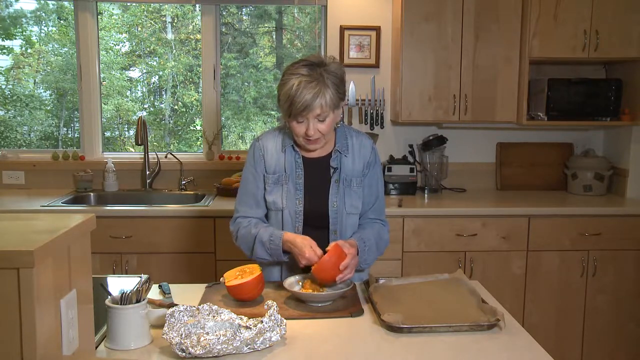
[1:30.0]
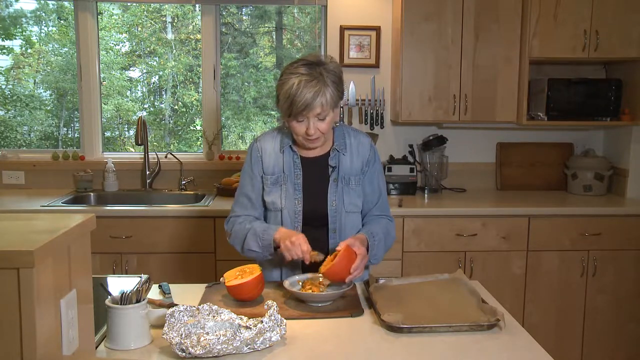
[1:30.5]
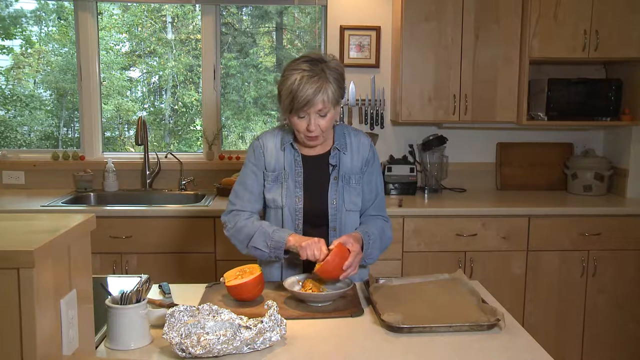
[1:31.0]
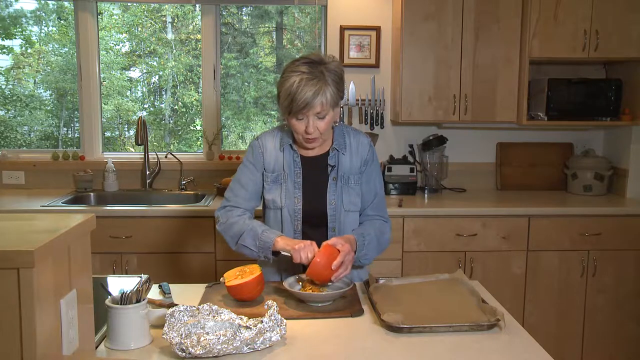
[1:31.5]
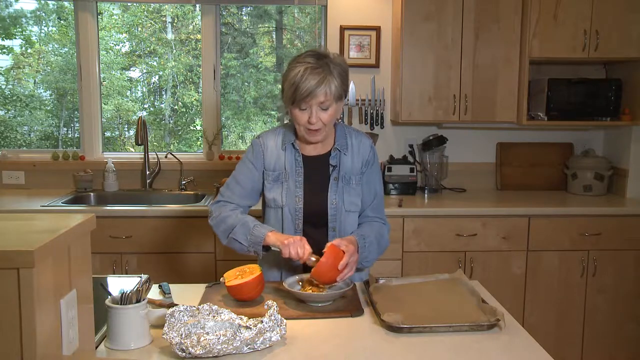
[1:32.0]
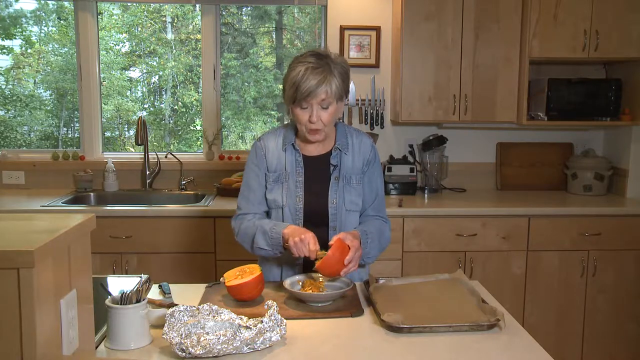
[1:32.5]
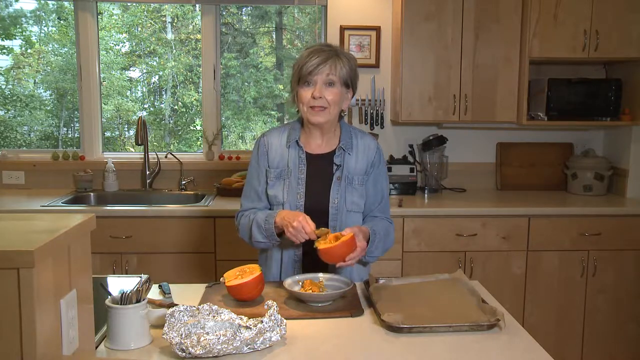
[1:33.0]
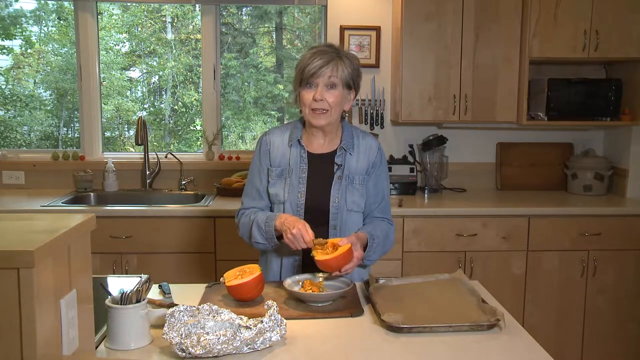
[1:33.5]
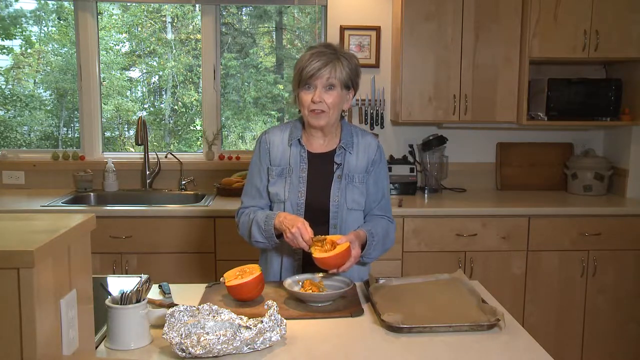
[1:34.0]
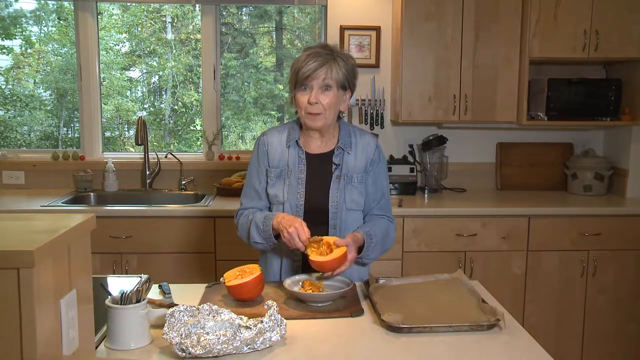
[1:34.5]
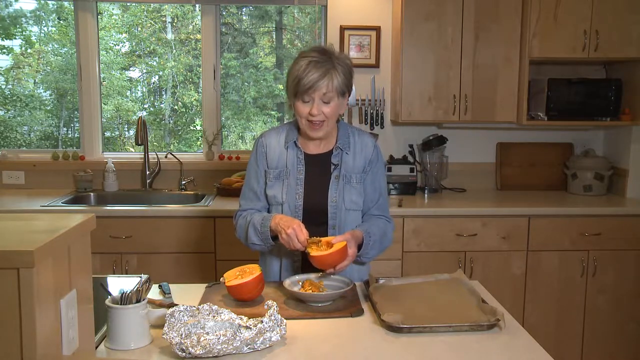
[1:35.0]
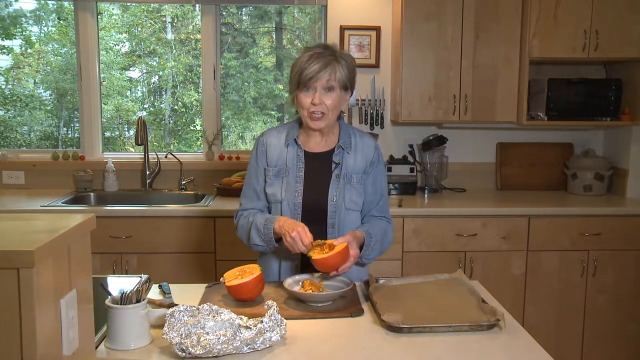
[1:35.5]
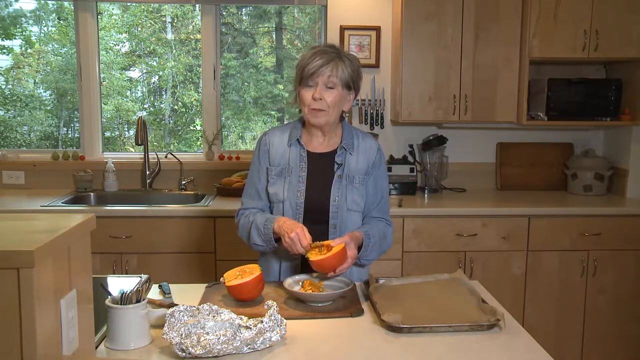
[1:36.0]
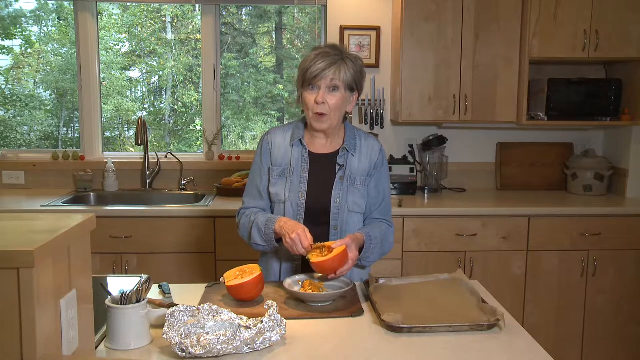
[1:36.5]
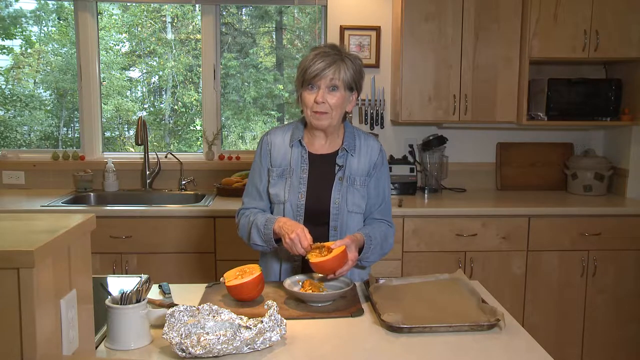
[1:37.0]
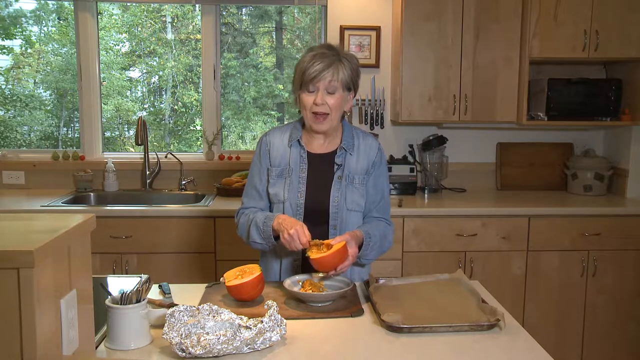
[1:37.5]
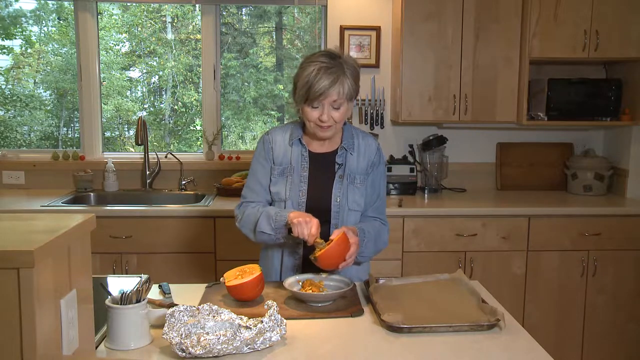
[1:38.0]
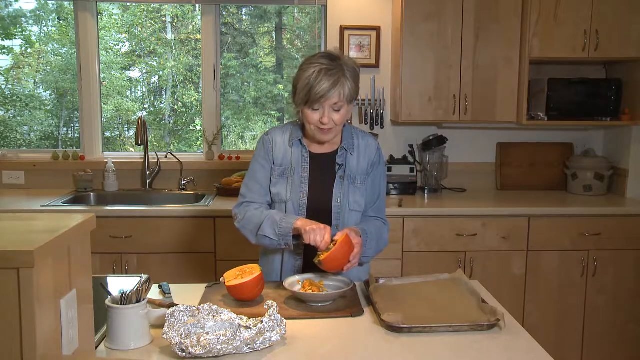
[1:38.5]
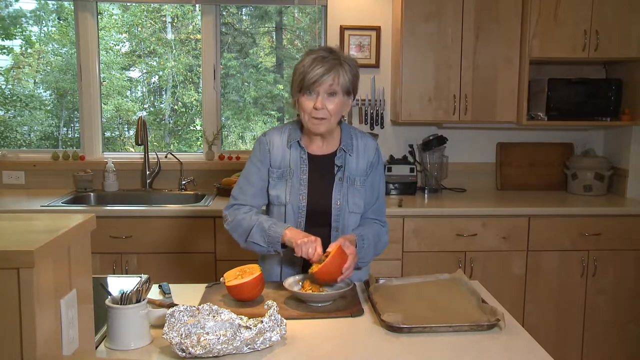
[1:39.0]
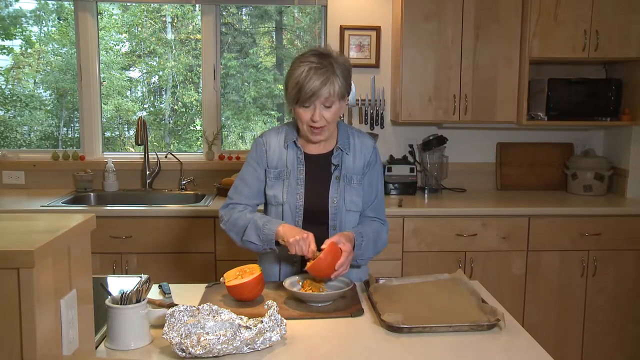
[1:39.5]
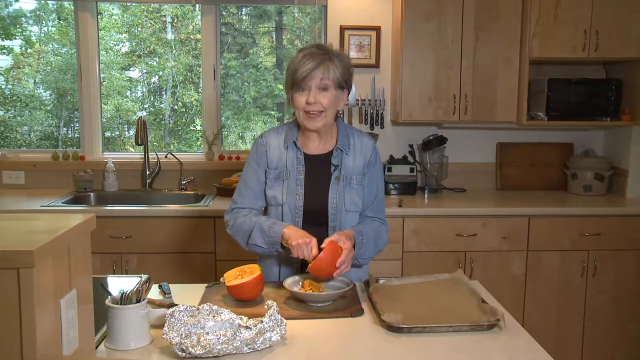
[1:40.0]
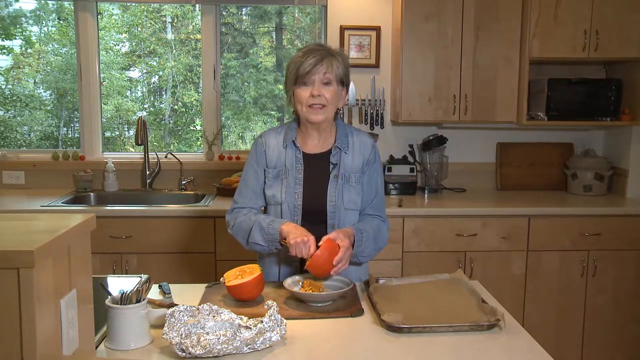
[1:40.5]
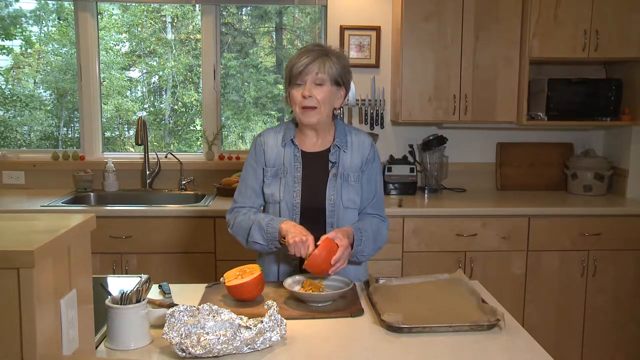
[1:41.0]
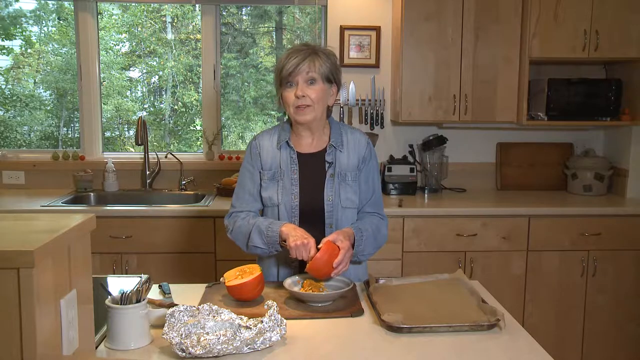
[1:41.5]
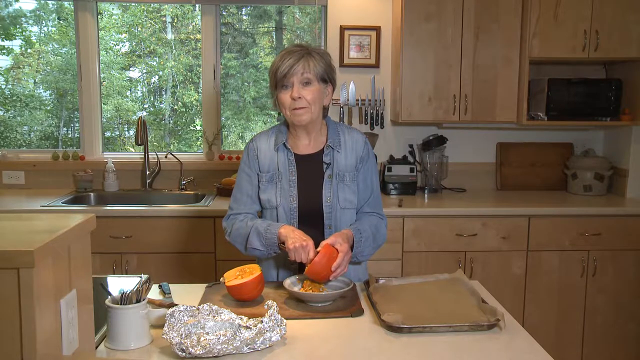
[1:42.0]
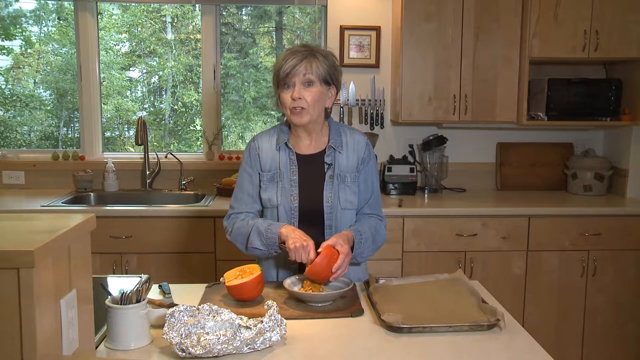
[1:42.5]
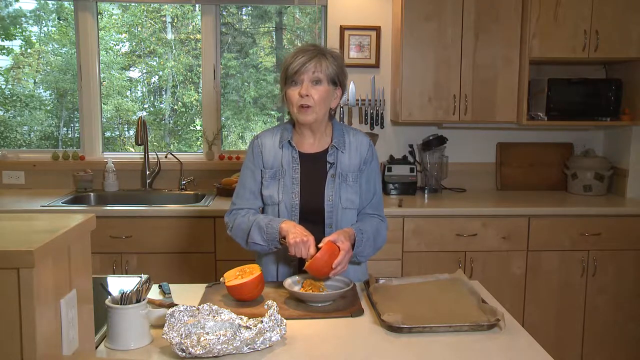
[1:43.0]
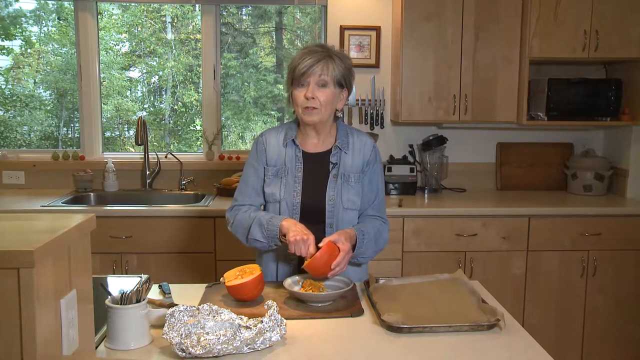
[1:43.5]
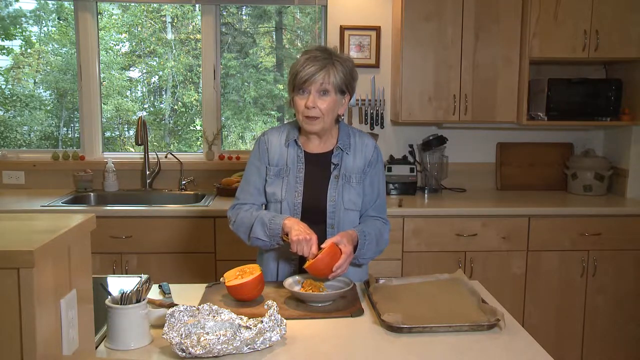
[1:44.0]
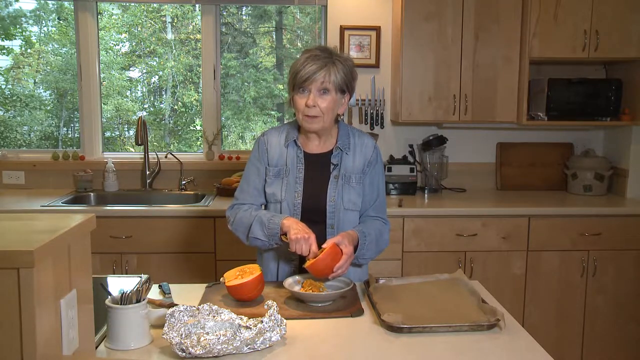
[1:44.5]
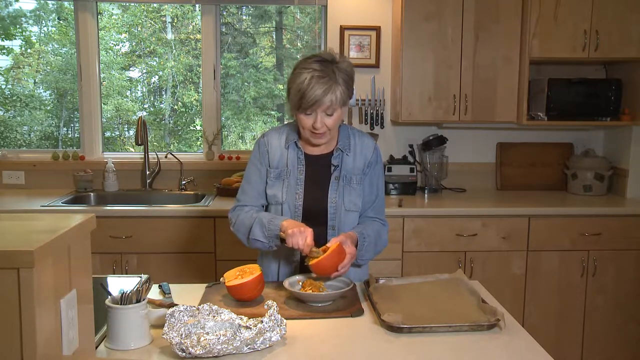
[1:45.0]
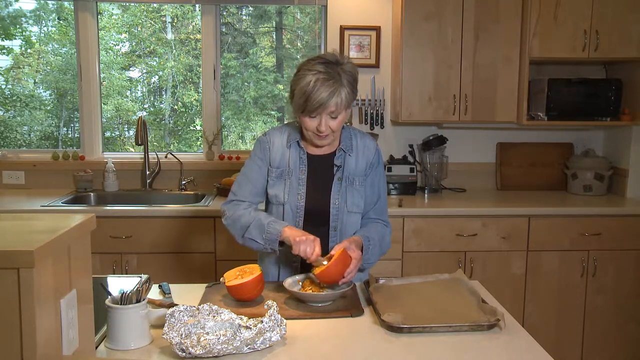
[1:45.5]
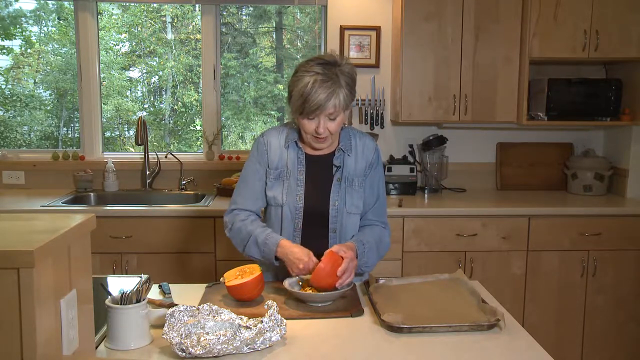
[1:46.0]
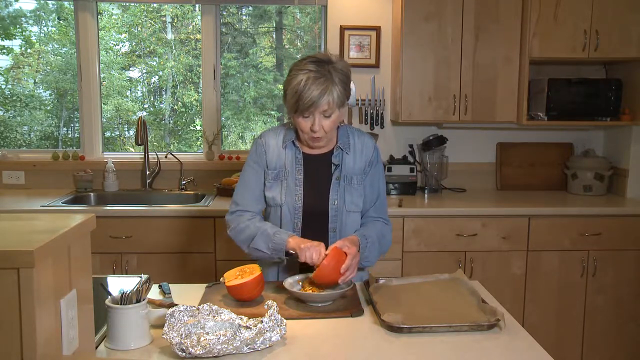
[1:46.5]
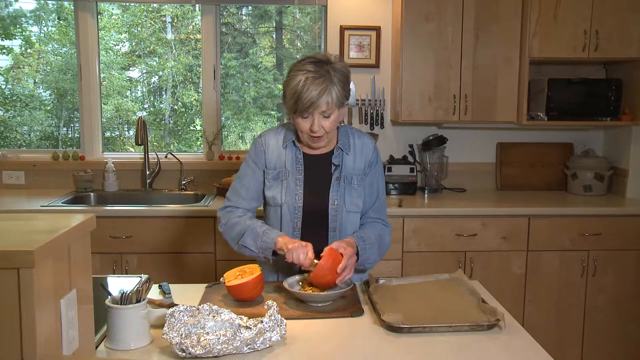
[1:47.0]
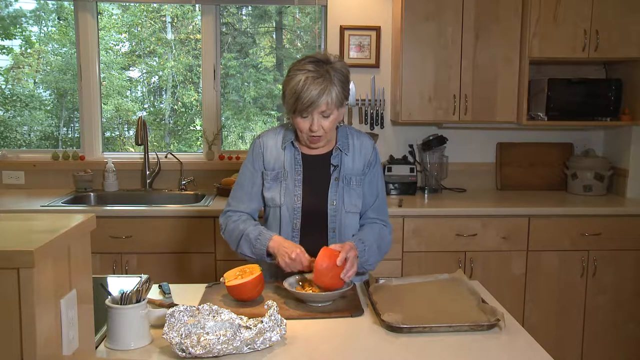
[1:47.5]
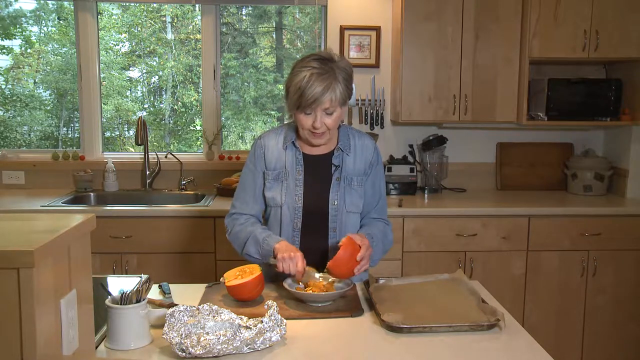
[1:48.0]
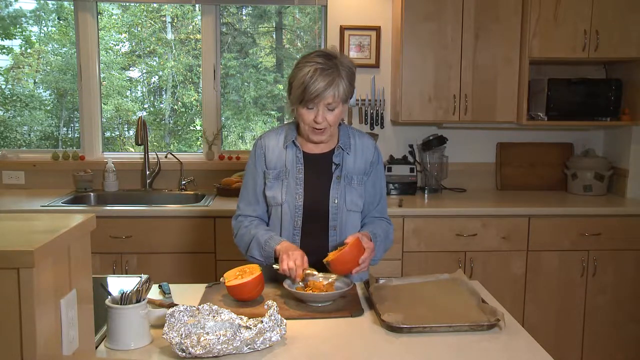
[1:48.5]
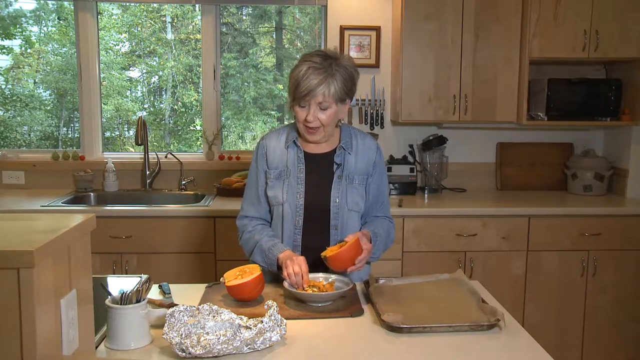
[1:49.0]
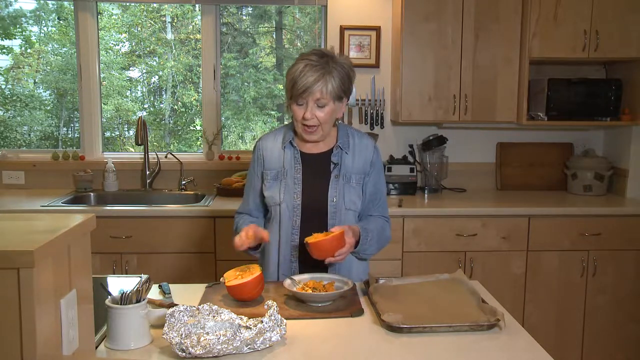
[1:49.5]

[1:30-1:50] The woman digs out the seeds, probably going a little deeper to make sure all of them are gone; it looks like there is still a good bit of pulp in there. The bowl is getting filled. She takes her time, not moving her hands much while she talks, and then gets a little faster. She finishes and carefully sets the spoon on top of the pulp area, then starts to look at the other half. As she talks she becomes a little more animated. The baking pan lined with parchment paper is still next to her. She puts her right hand on top of the final pumpkin half.